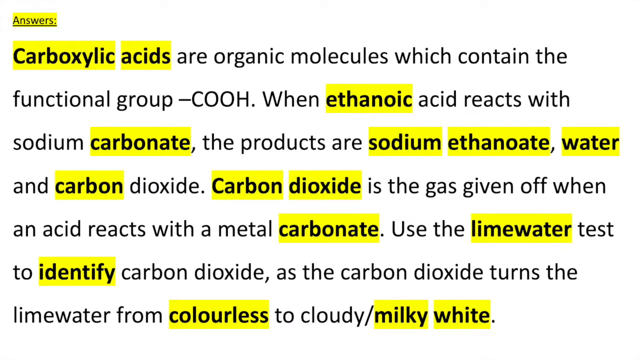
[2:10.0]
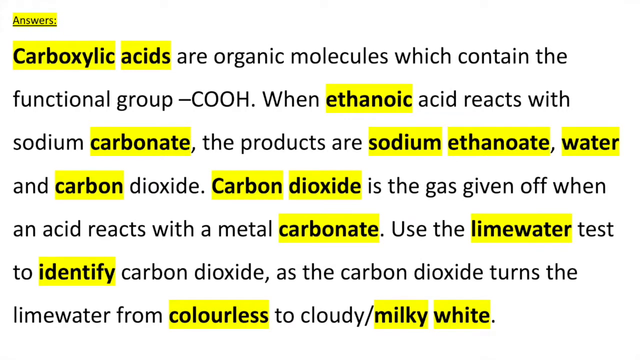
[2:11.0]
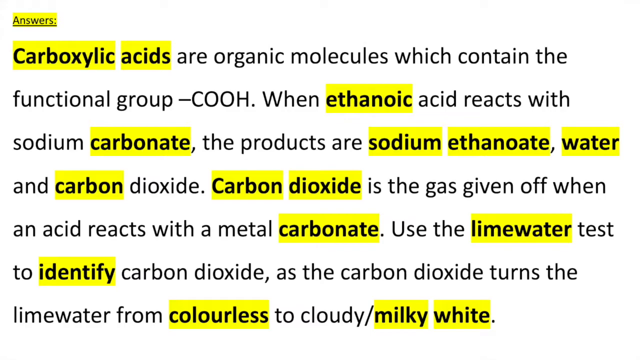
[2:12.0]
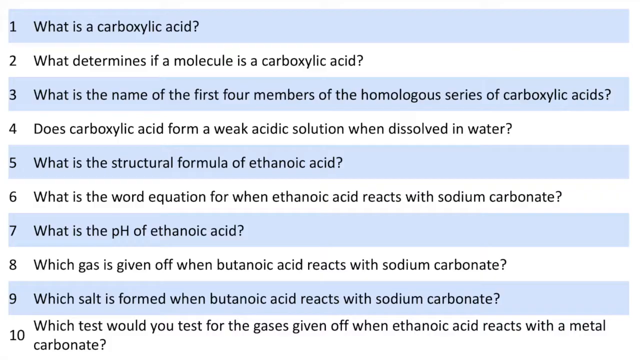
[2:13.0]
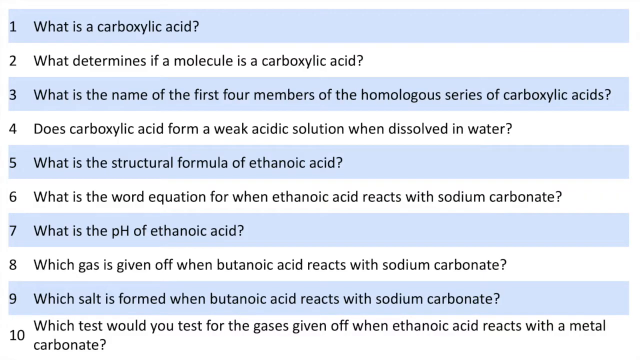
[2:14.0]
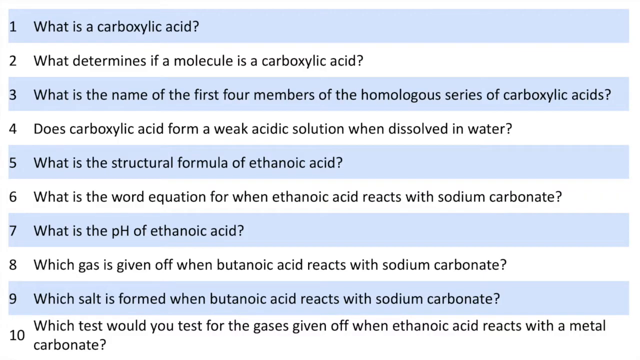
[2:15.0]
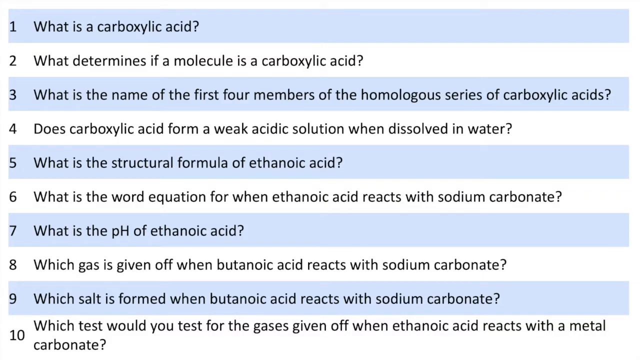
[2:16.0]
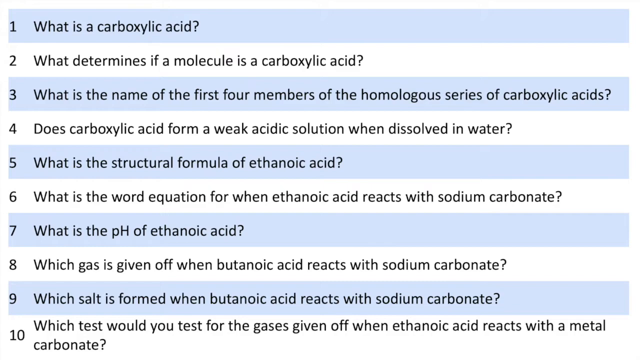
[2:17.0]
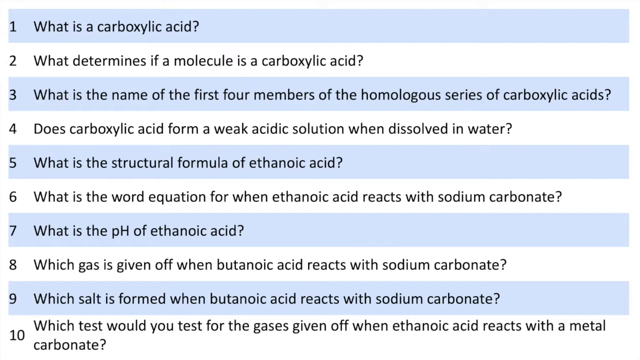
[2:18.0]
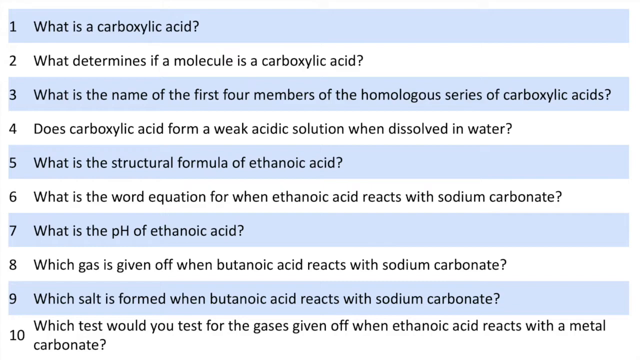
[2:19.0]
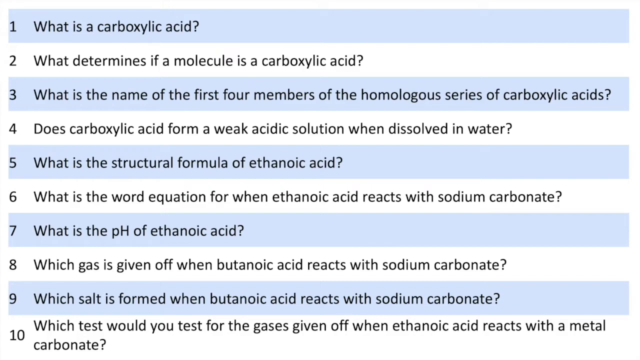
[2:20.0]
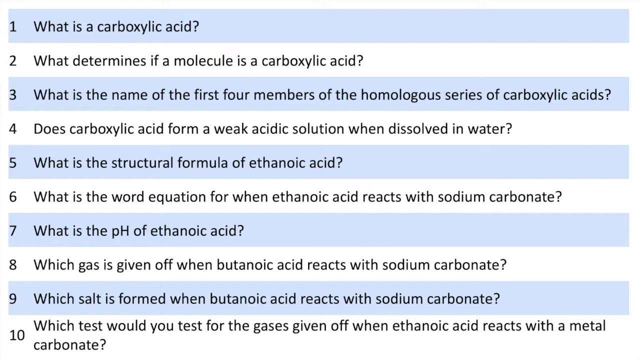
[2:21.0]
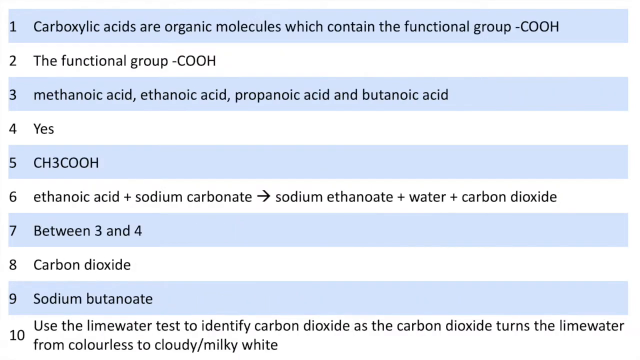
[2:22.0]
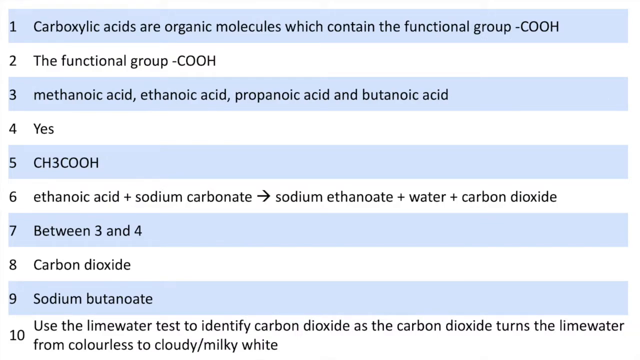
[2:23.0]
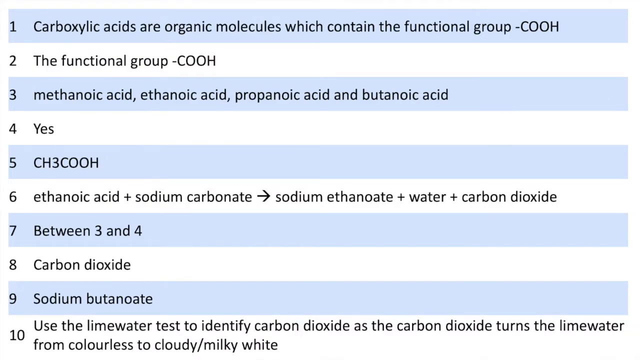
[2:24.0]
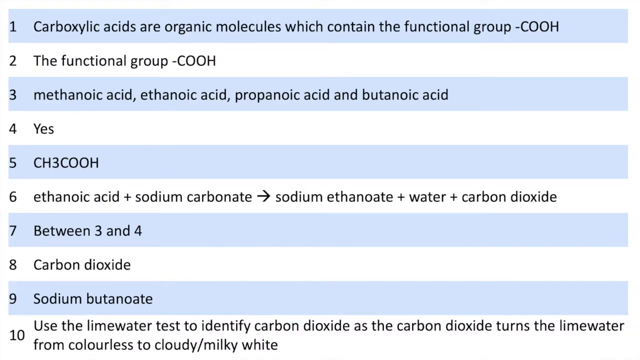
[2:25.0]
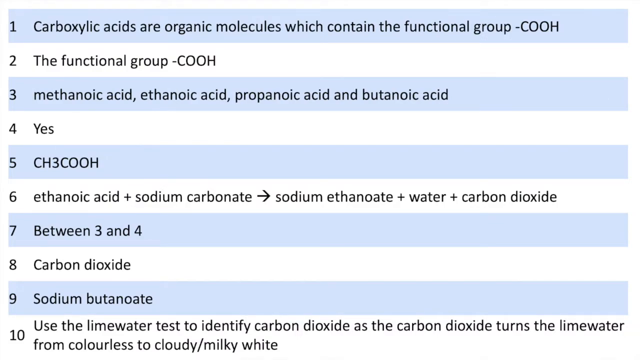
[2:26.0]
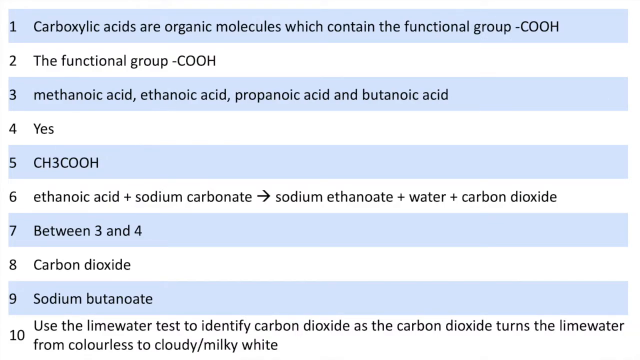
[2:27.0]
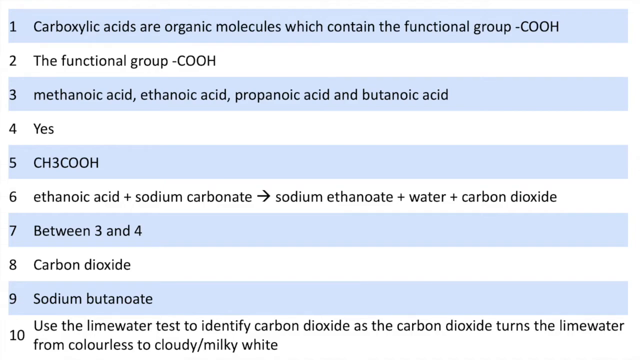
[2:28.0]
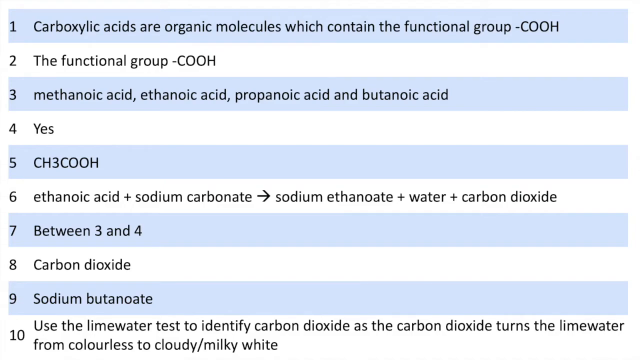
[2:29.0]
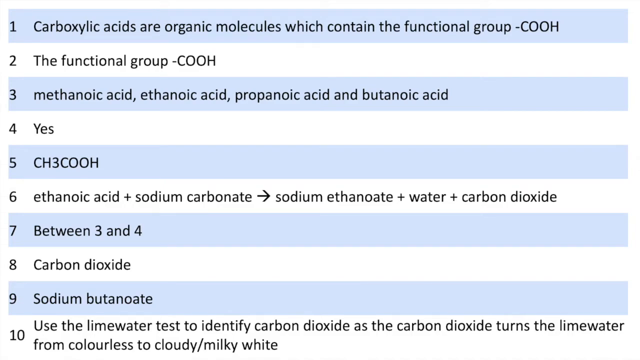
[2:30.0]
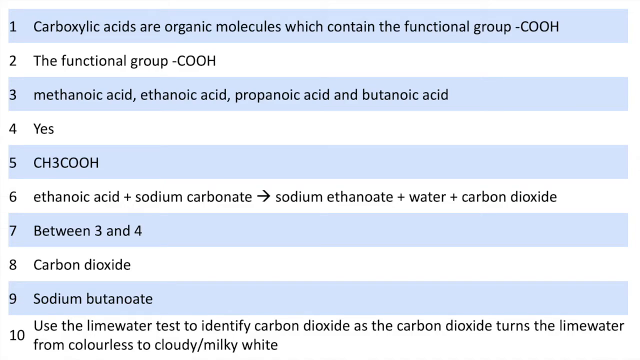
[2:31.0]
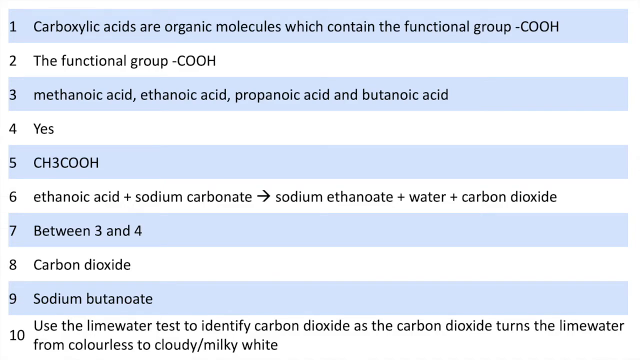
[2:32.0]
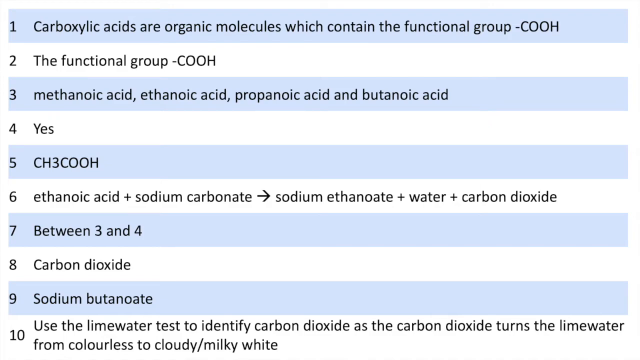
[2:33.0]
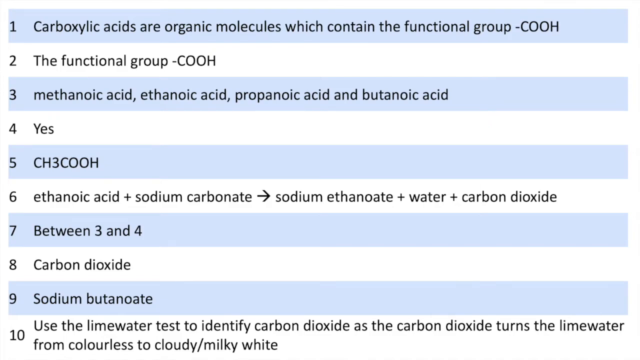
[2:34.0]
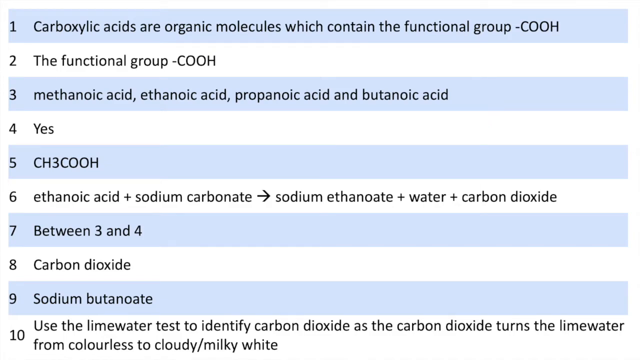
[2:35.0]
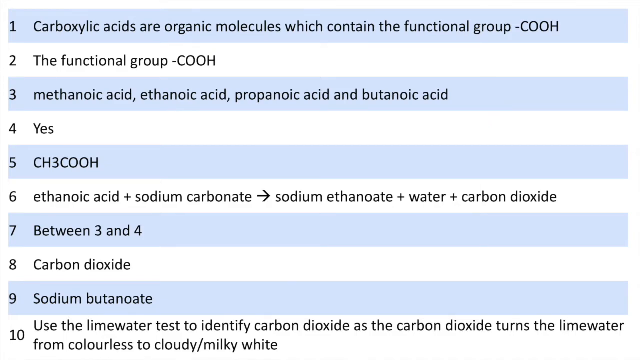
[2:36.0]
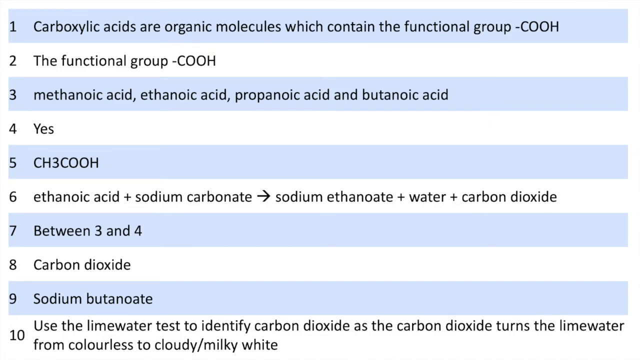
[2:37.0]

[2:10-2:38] The fill-in-the-blank screen transitions to an answer screen where the answers for the blanks are highlighted in yellow and written in bold. The text reads: "carboxylic acids are organic molecules which contain the functional group COOH. When ethanoic acid reacts with sodium carbonate, the products are sodium ethanoate, water and carbon dioxide. Carbon dioxide is the gas given off when an acid reacts with a metal carbonate. Use the lime water test to identify carbon dioxide as the carbon dioxide turns the lime water from colorless to cloudy milky white." The highlighted words are carboxylic acids, ethanoic, carbonate, sodium ethanoate, water and carbon, carbon dioxide and carbonate, and lime water, identify, colorless and milky white, marking where the audience was supposed to fill in the answers. The scene then switches to a new page with alternating blue and white bars, each containing text. There are 10 questions: "1. What is a carboxylic acid? 2. What determines if a molecule is a carboxylic acid? 3. What is the name of the first four members of the homologous series of carboxylic acids? 4. Does carboxylic acid form a weak acidic solution when dissolved in water? 5. What is the structural formula of ethanoic acid? 6. What is the word equation for when ethanoic acid reacts with sodium carbonate? 7. What is the pH of ethanoic acid? 8. Which gas is given off when butanoic acid reacts with sodium carbonate? 9. Which salt is formed when butanoic acid reacts with sodium carbonate? 10. Which test would you test for the gases given off when ethanoic acid reacts with a metal carbonate?" The answers are given on the next screen: 1, carboxylic acids are organic molecules which contain the functional group COOH; 2, the functional group COOH; 3, methanoic acid, ethanoic acid, propanoic acid and butanoic acid; 4, yes; 5, CH3COOH; 6, ethanoic acid plus sodium carbonate, reaction arrow, sodium ethanoate plus water plus carbon dioxide; 7, between 3 and 4; 8, carbon dioxide; 9, sodium butanoate; 10, use the lime water test to identify carbon dioxide as the carbon dioxide turns the lime water from colorless to milky white or cloudy.